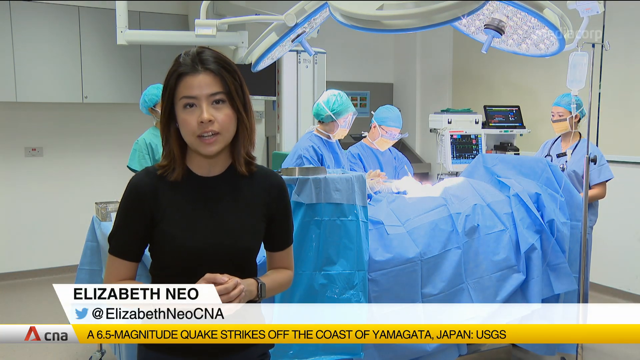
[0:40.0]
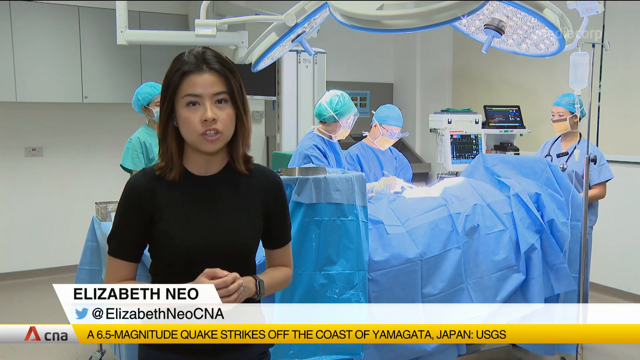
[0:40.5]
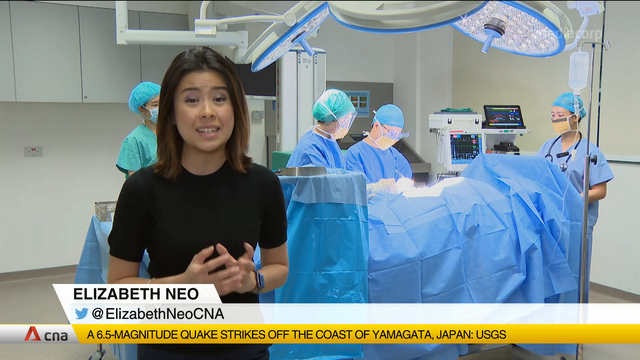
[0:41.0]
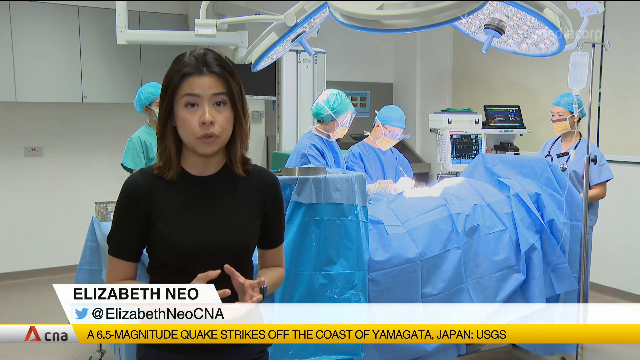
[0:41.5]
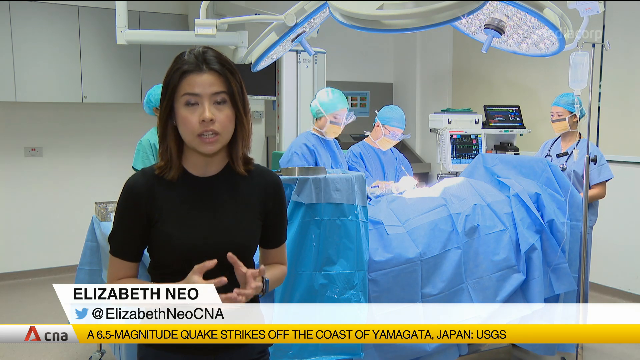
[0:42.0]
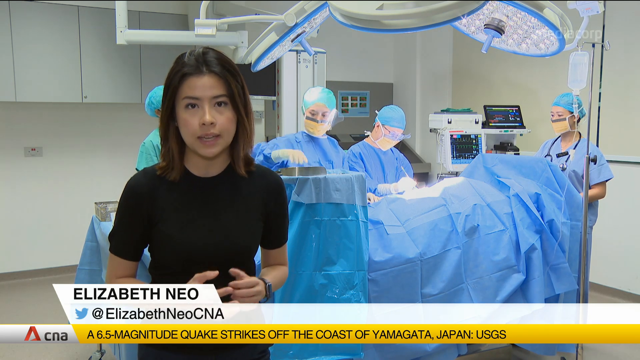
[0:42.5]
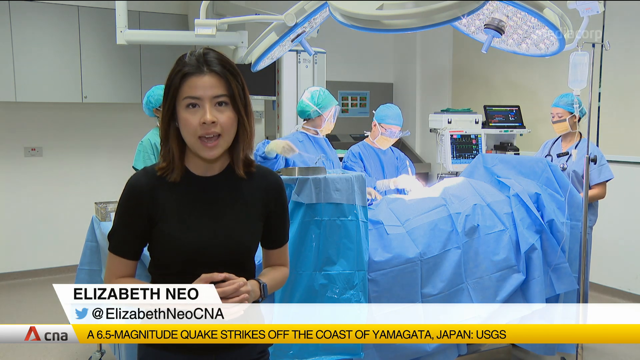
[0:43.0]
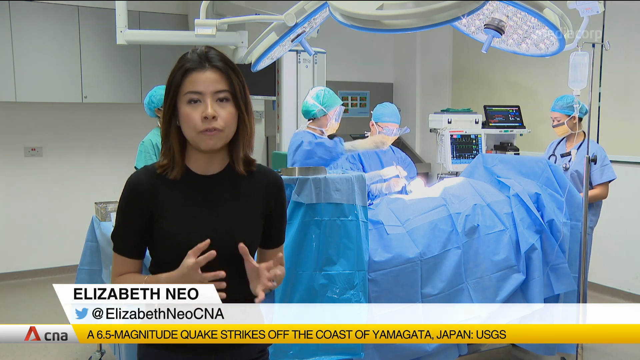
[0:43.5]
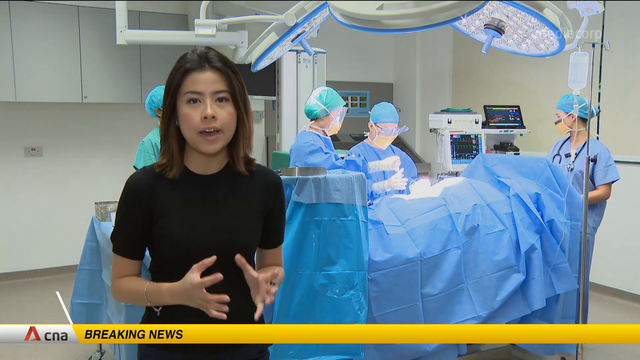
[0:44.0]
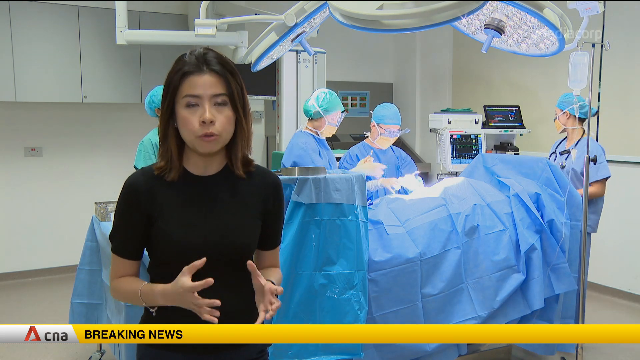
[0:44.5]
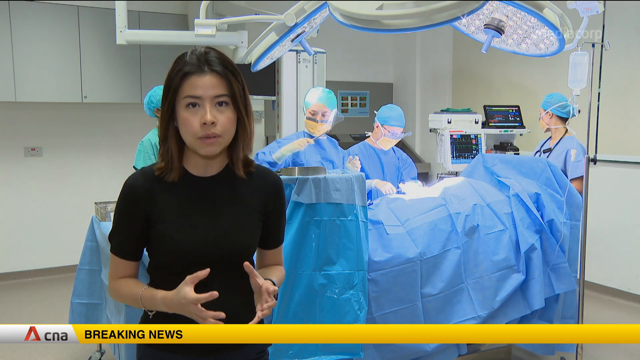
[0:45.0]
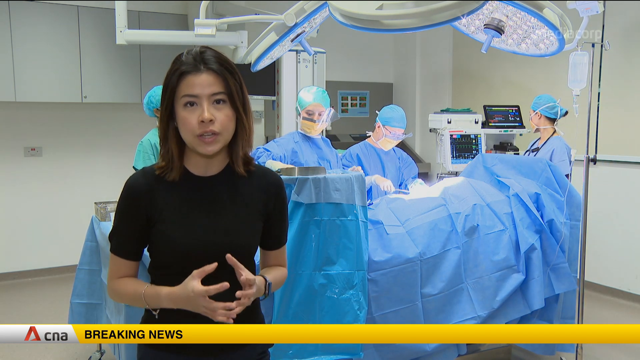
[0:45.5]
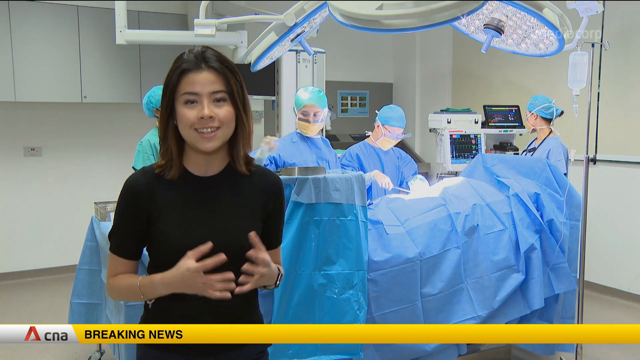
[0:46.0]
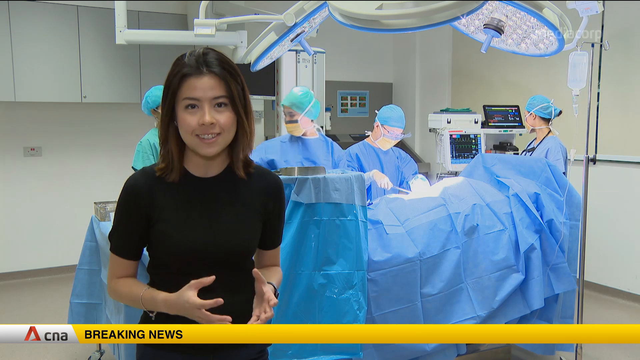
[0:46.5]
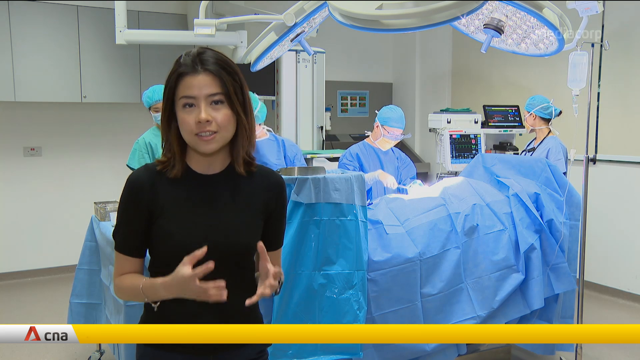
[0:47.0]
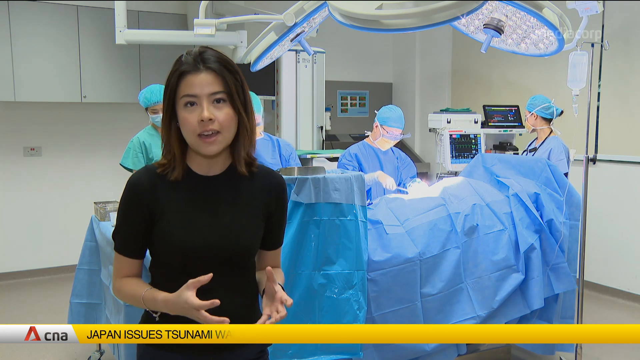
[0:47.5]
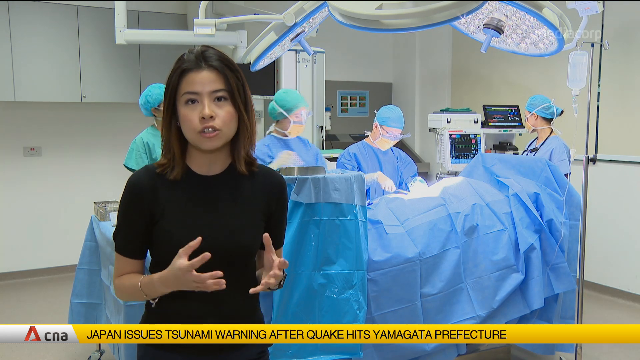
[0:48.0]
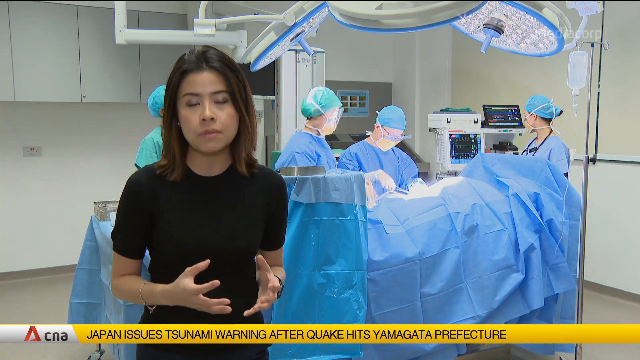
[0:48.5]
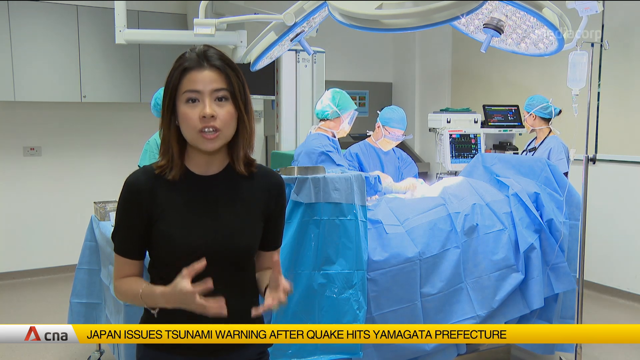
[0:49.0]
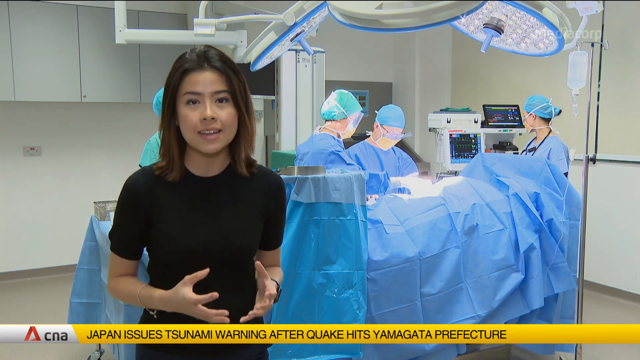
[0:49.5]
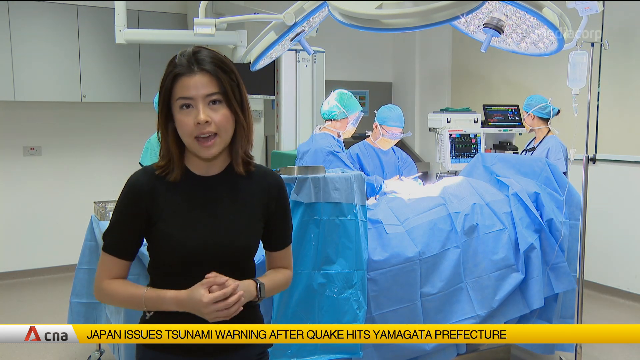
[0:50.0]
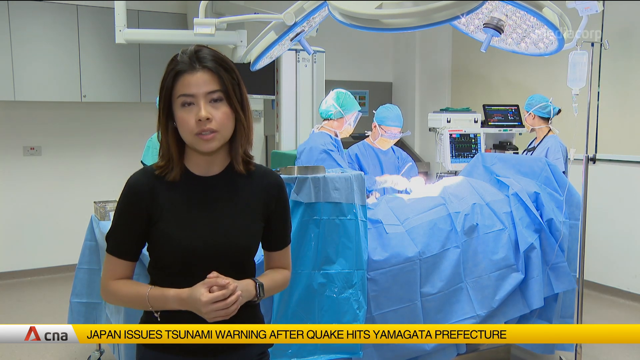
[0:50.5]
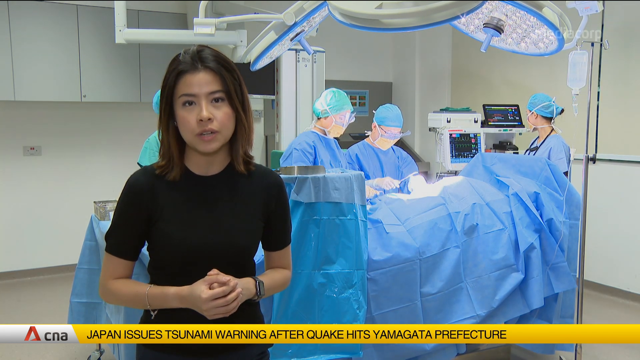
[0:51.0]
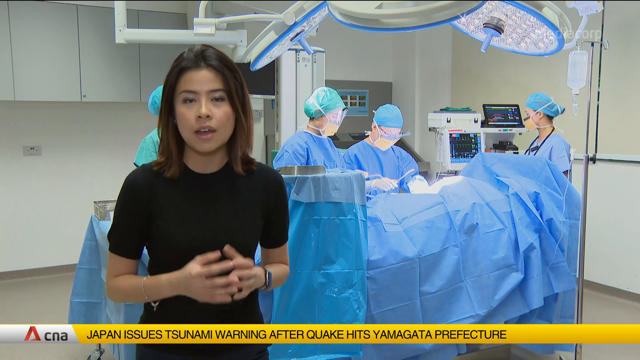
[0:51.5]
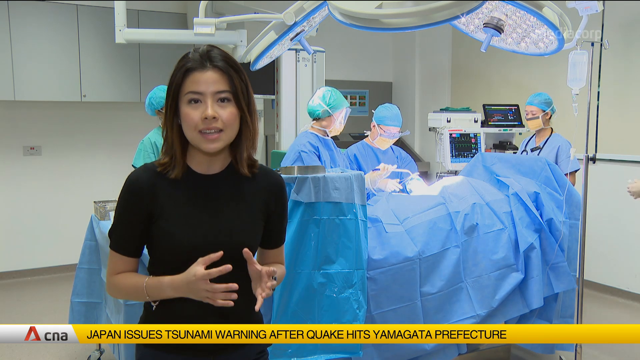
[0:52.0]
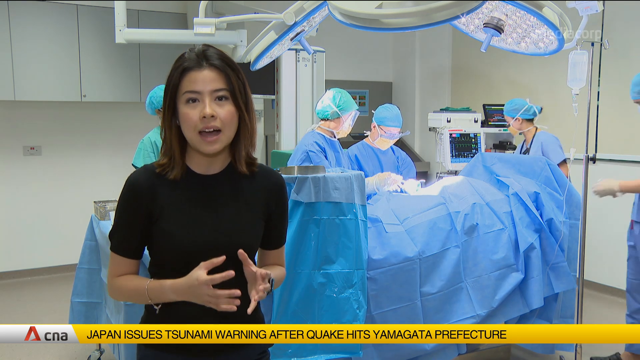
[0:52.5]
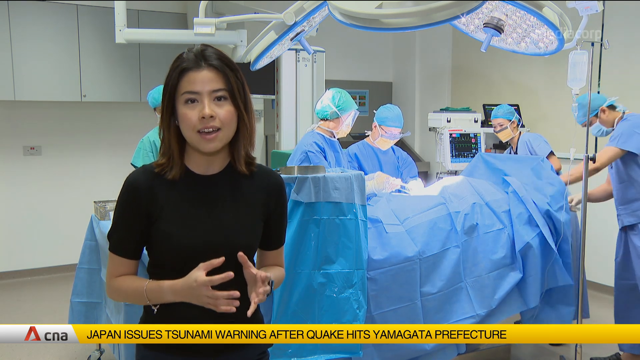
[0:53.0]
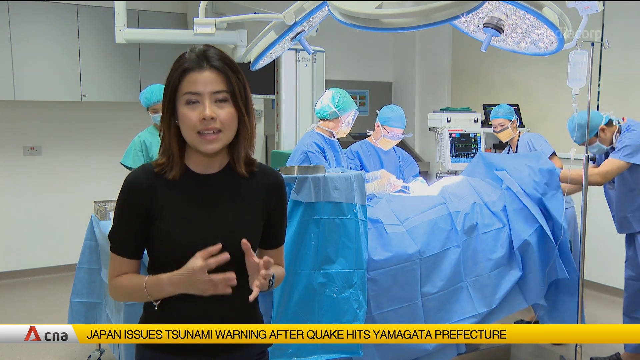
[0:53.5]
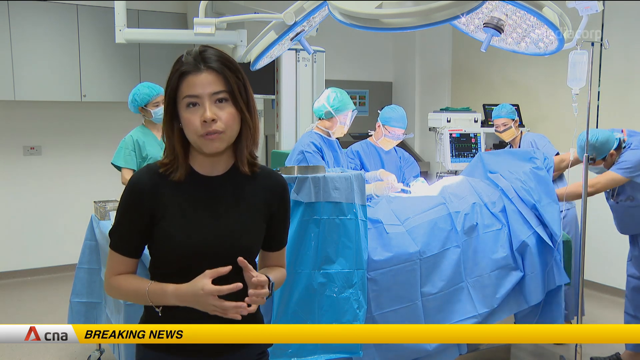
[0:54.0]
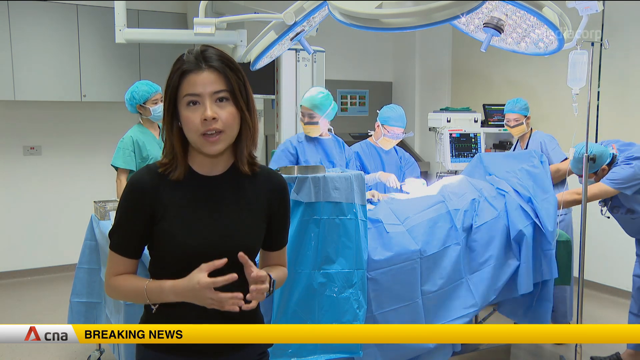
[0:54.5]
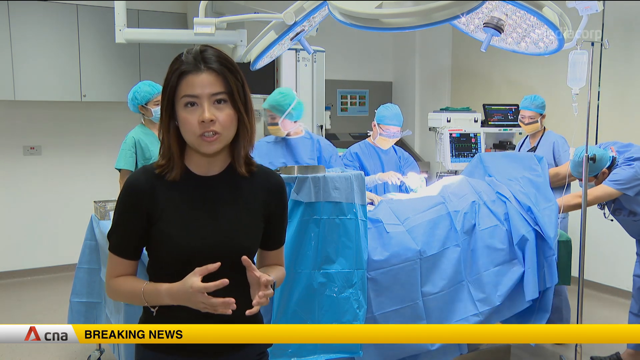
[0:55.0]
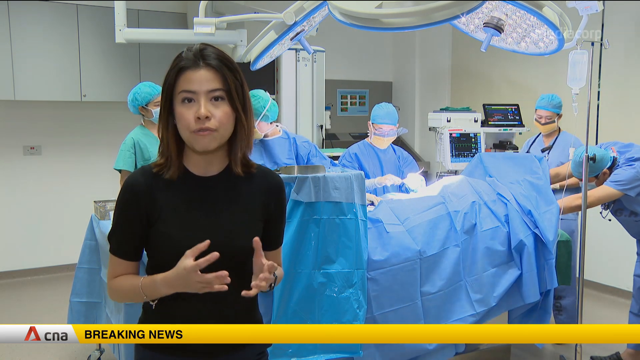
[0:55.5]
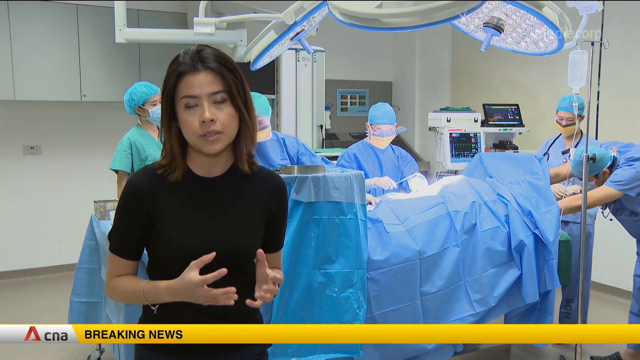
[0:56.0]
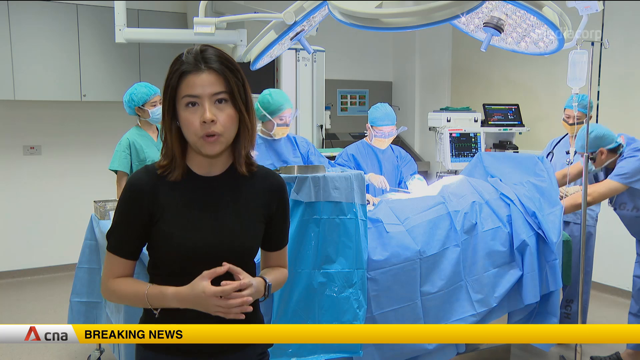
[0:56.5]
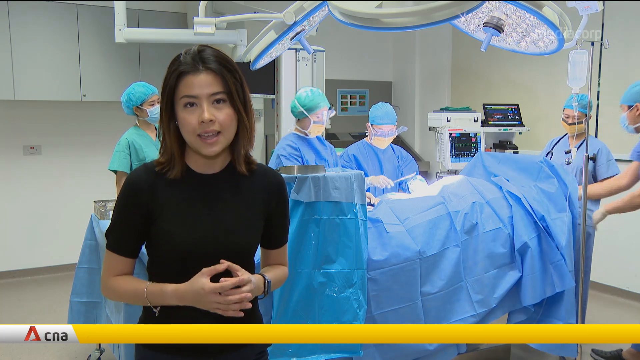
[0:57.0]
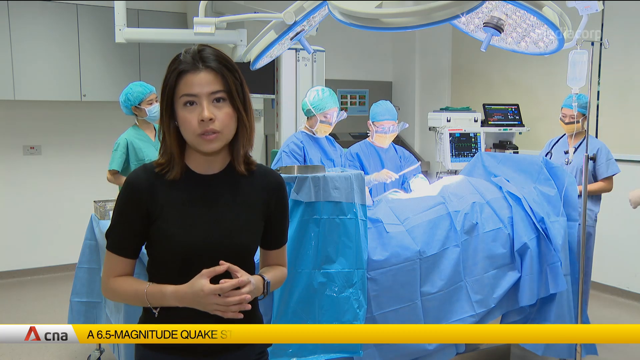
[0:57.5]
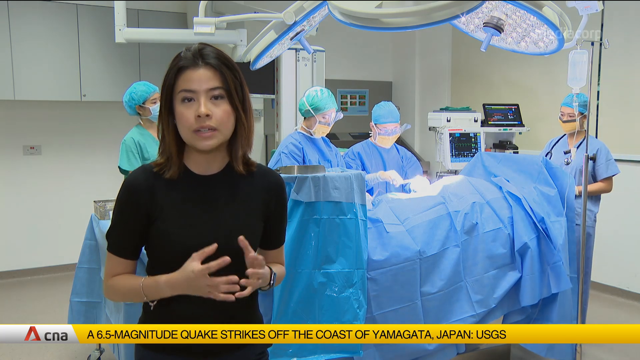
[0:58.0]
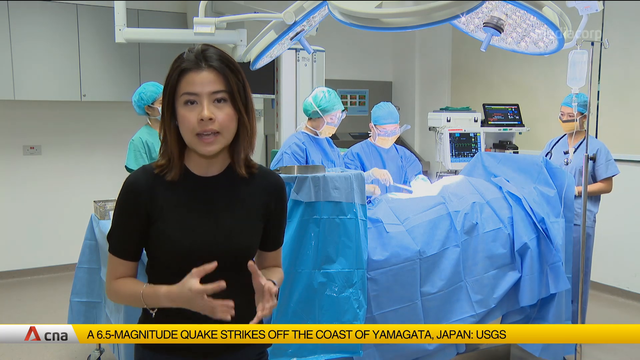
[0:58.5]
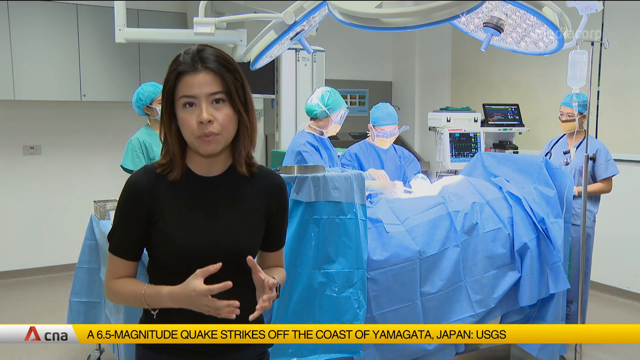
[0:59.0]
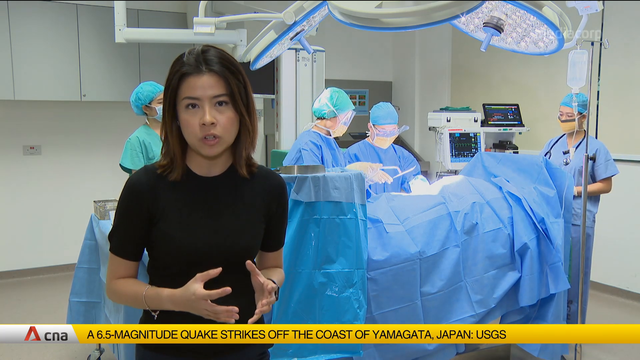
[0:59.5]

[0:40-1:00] In a hospital setting, a newscaster stands on the left, with her name, "Elizabeth Neo," in capital black letters in a white bar below her. She is an Asian woman with brown hair down to her shoulders, wearing a black t-shirt. She faces the camera with her two hands in front of her torso, positioned as if holding an invisible ball, and keeps talking while kind of playing with that invisible ball. Behind her is a hospital bed with a presumed person in it under a draped blue sheet, and four doctors or nurses are around it, all in medical masks, blue gowns and hair nets. A yellow banner then appears left to right below her, with black text about other news items; it then switches to breaking news and goes back to showing the other news items.